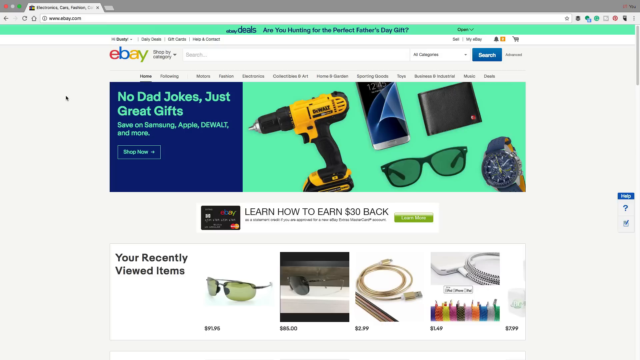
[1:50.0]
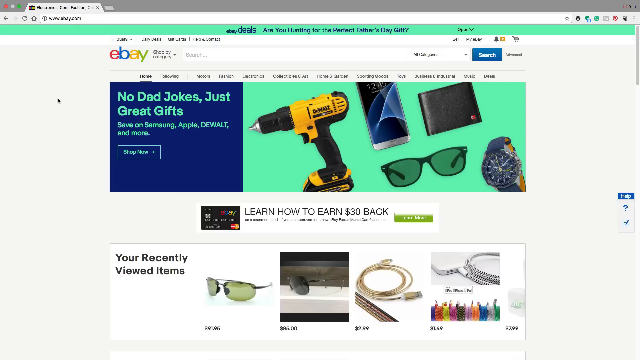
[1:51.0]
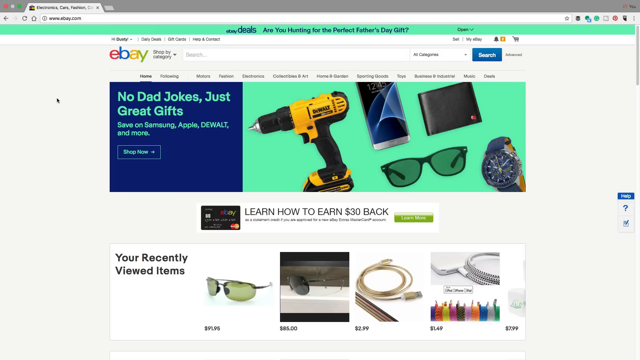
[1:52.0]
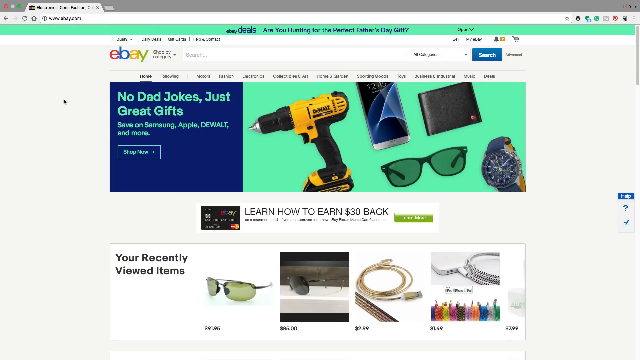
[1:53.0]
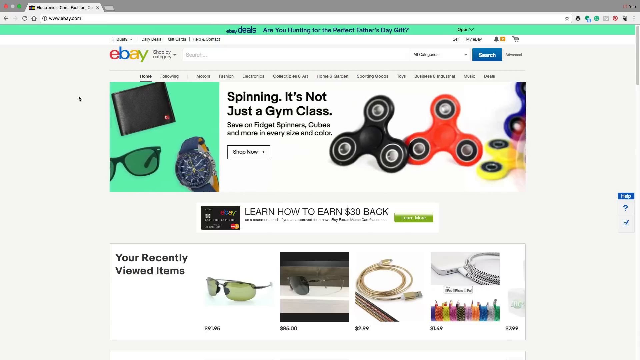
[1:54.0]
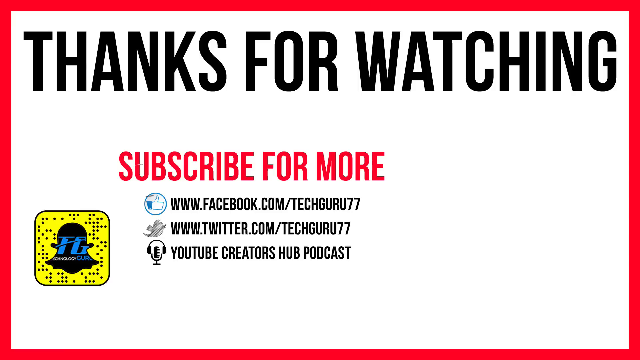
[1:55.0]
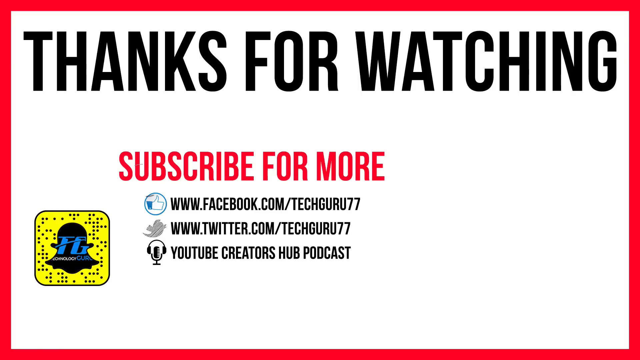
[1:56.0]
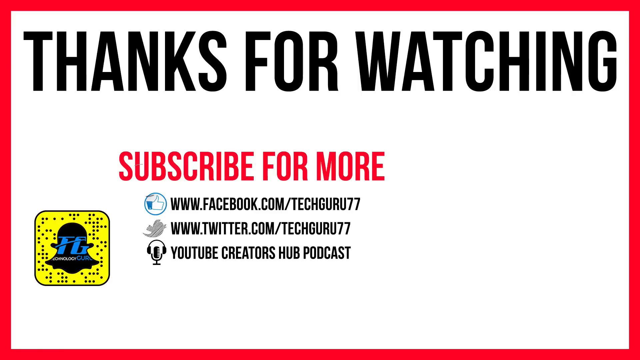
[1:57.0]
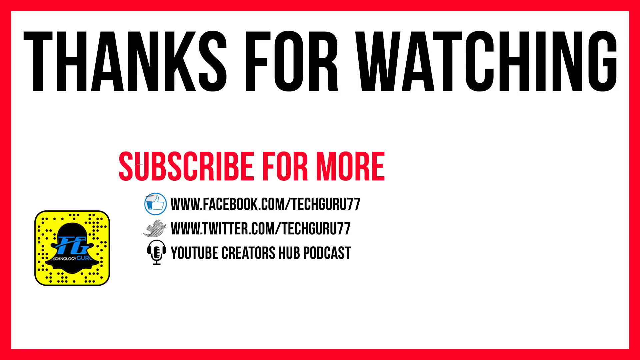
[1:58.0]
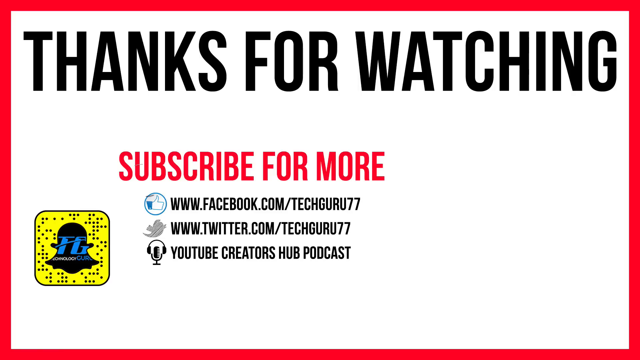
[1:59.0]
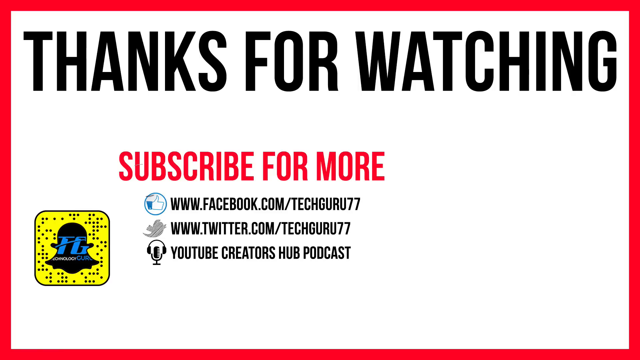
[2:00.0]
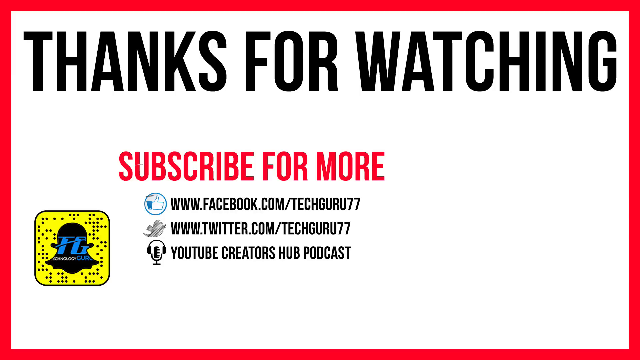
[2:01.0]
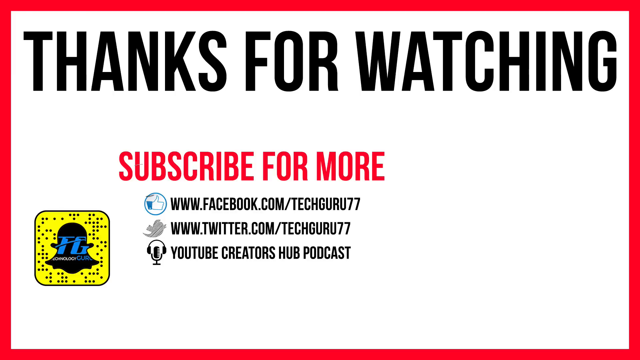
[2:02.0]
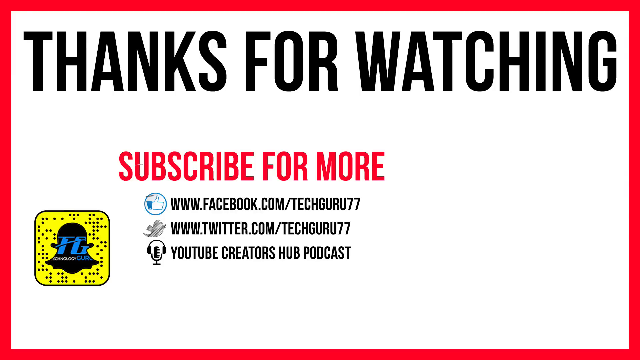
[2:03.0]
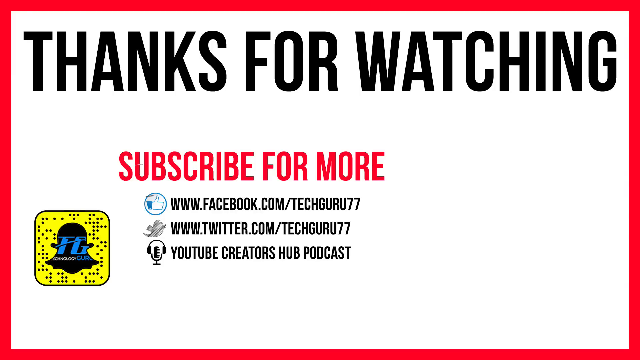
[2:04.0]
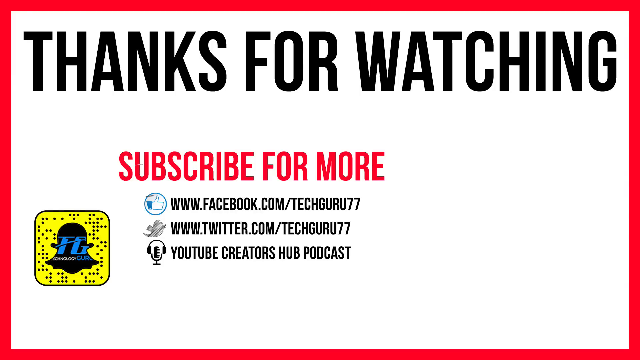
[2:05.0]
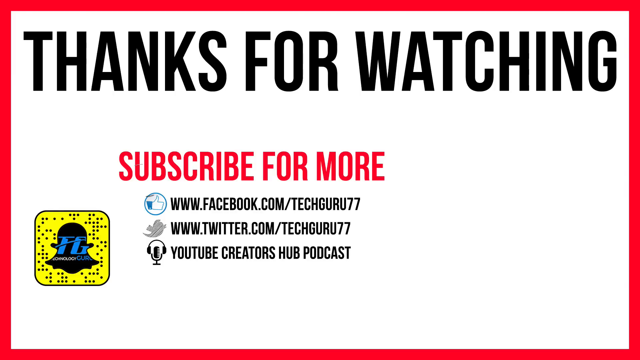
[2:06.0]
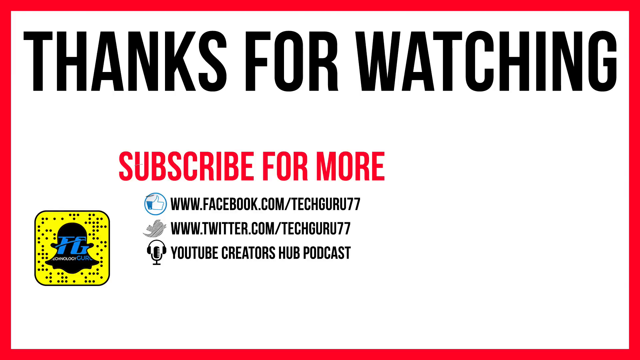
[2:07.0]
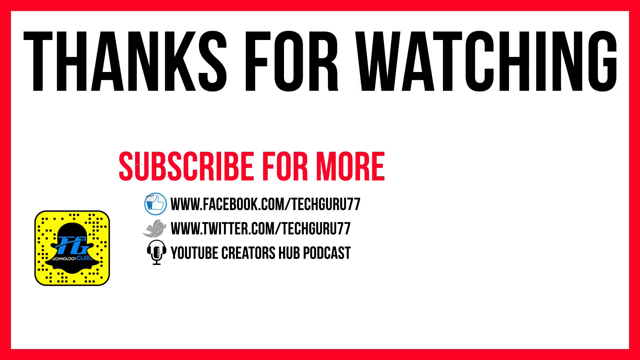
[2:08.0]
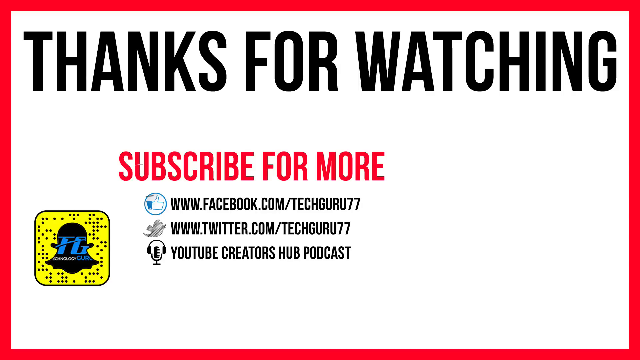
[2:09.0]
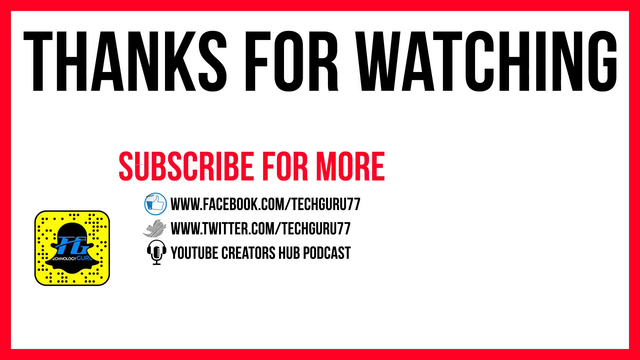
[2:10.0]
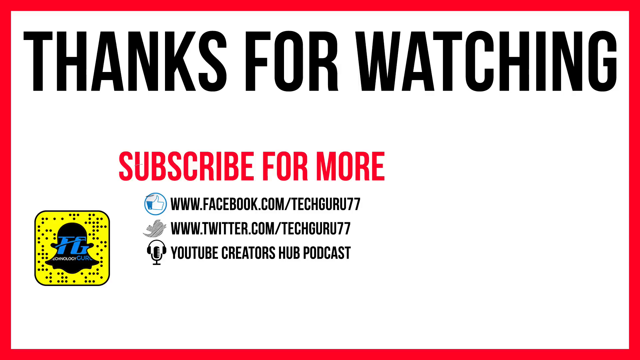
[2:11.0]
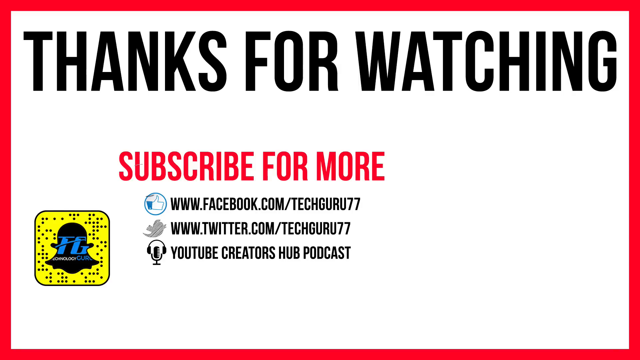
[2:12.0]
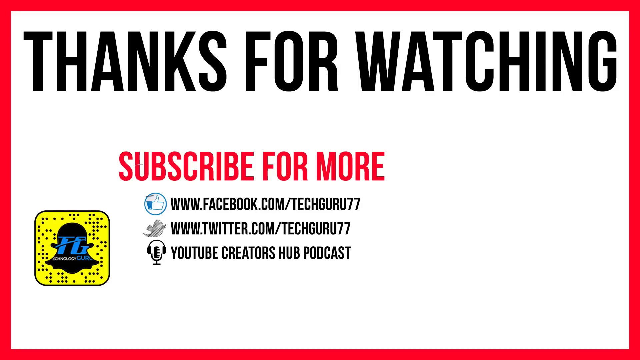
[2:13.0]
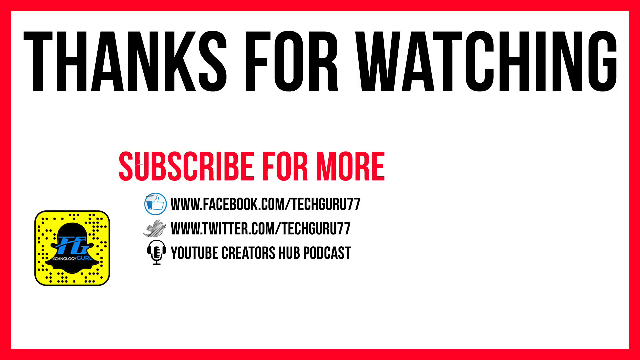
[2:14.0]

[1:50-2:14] The eBay homepage is shown with the mouse over toward the left side. The hero image scrolls through various graphics: the first says "Big savings on favorite brands", the second says "no dad jokes, just great gifts" and shows various toys for fathers, and then a quick image of fidget spinners appears. The final outro slide follows: a white, rectangular background that fills up the whole image, with a red outlined shading box around the outside of the rectangle. Inside, black all-caps text at the top in the very middle reads "thanks for watching", and beneath it red all-caps lettering says "subscribe for more". Facebook, Twitter and YouTube podcast links are shown, along with a Snapchat logo on the left side that can be scanned.